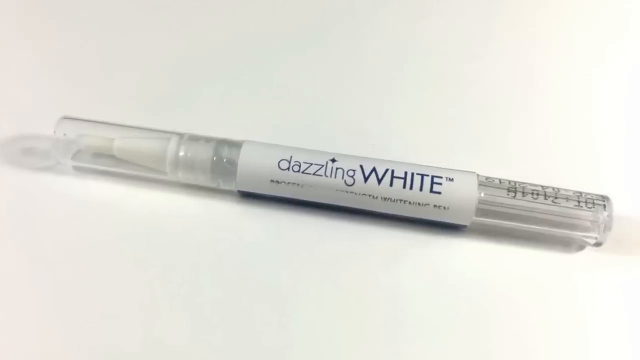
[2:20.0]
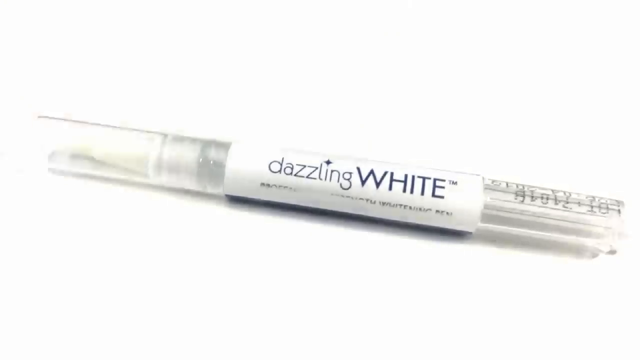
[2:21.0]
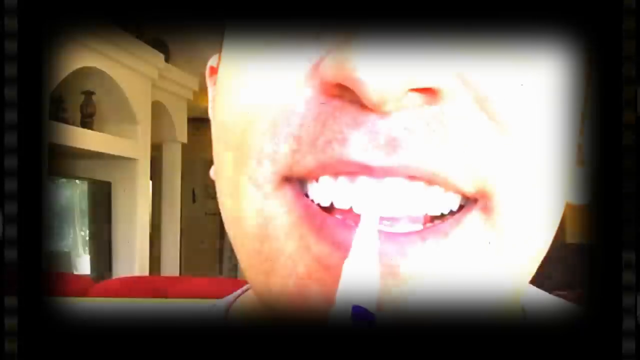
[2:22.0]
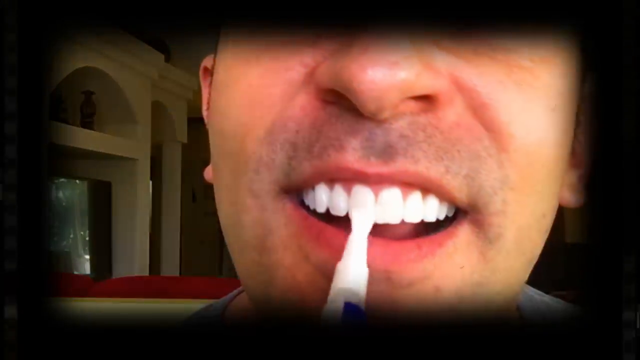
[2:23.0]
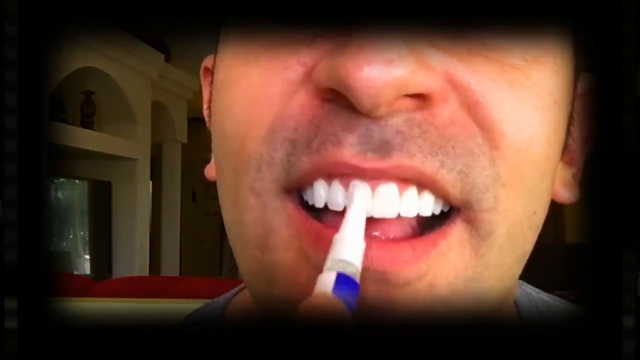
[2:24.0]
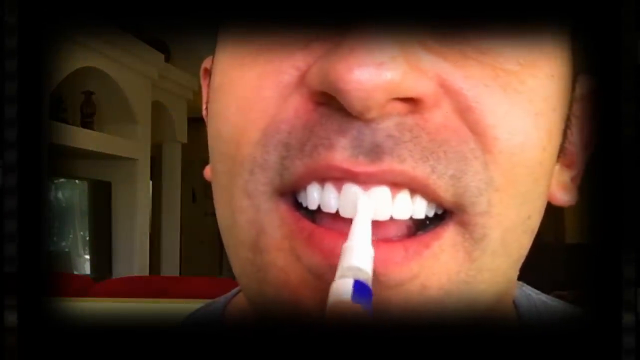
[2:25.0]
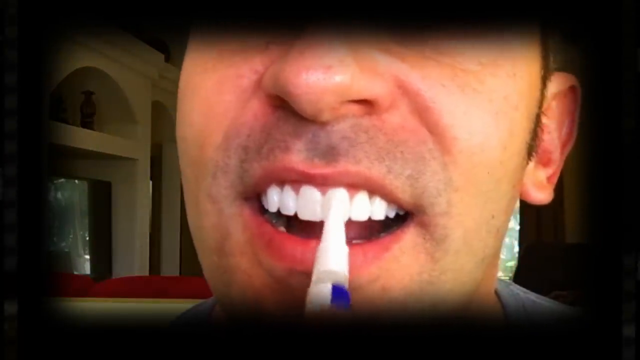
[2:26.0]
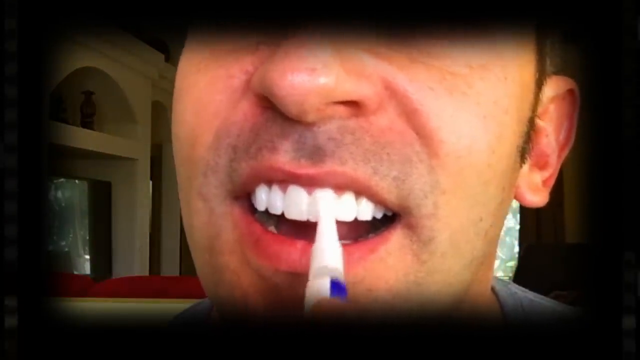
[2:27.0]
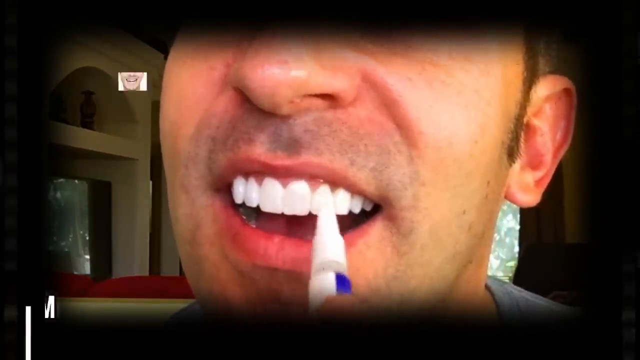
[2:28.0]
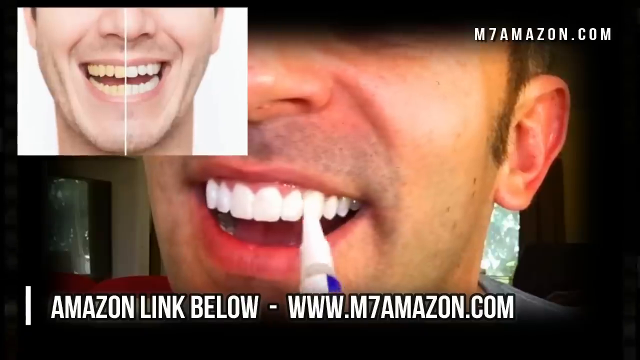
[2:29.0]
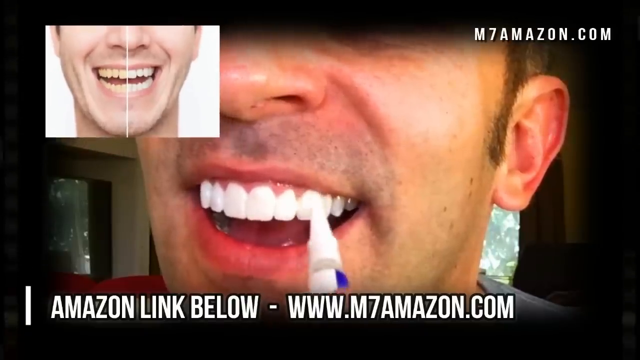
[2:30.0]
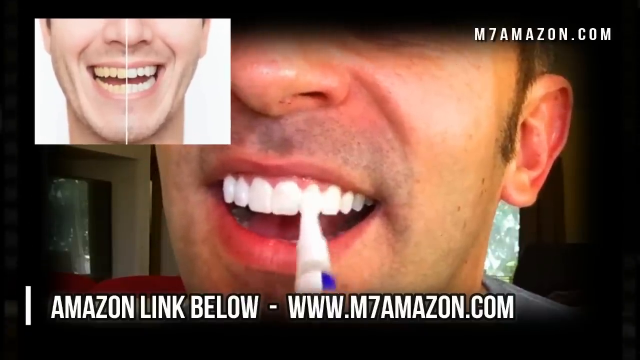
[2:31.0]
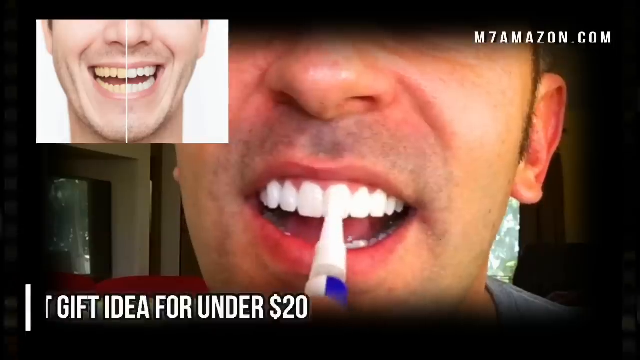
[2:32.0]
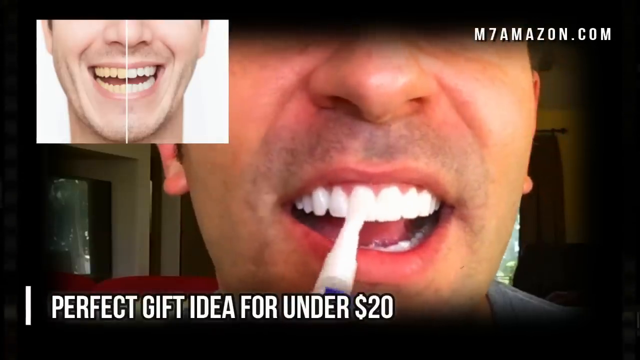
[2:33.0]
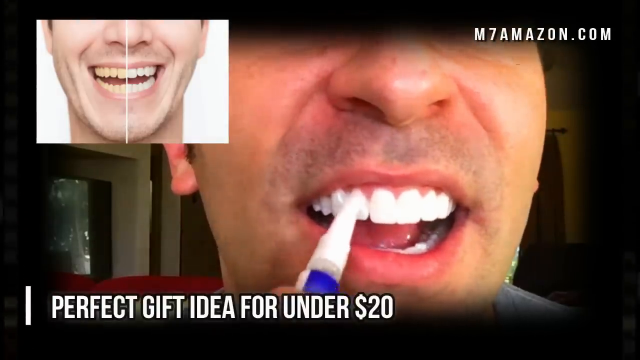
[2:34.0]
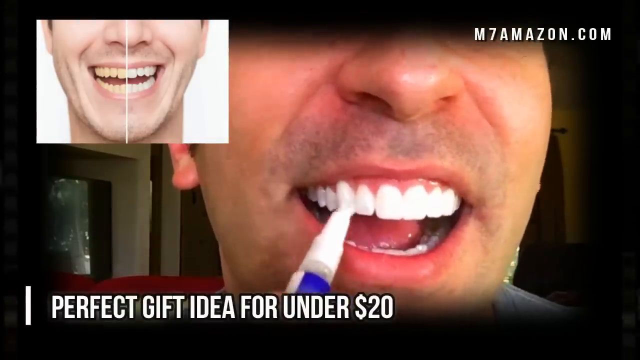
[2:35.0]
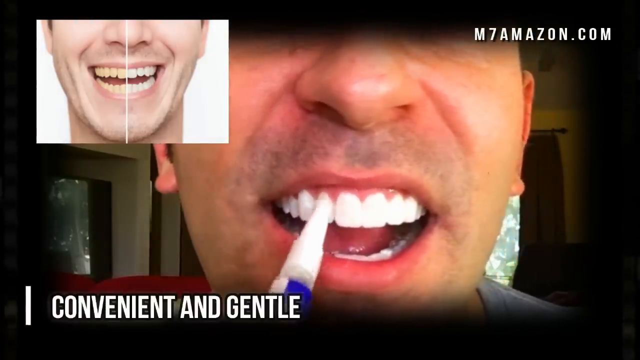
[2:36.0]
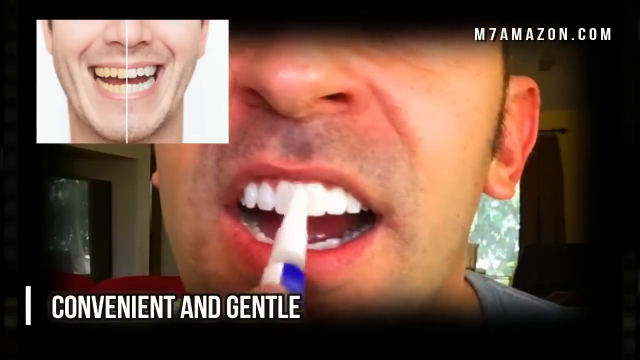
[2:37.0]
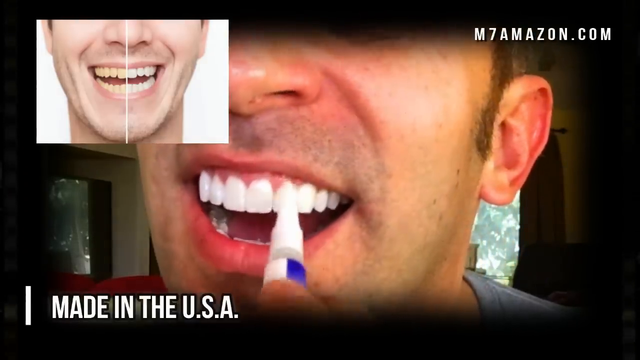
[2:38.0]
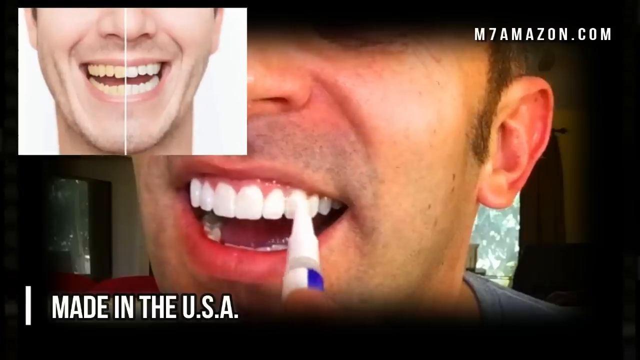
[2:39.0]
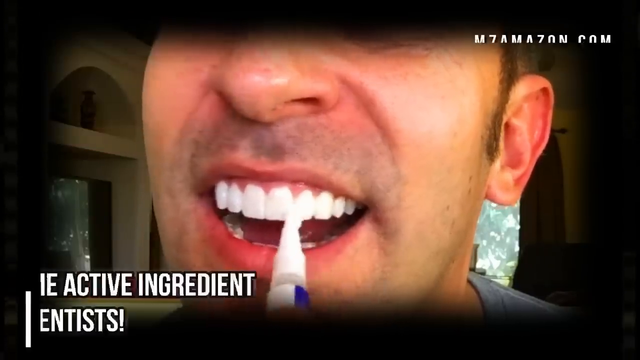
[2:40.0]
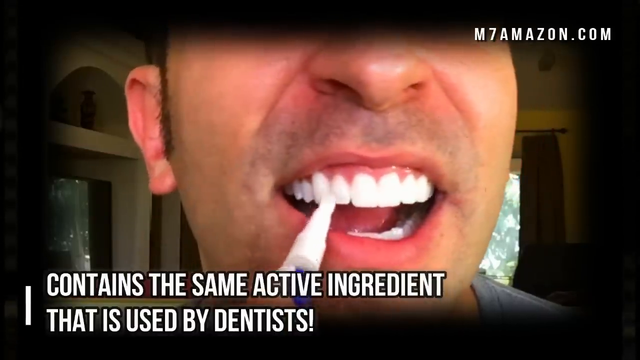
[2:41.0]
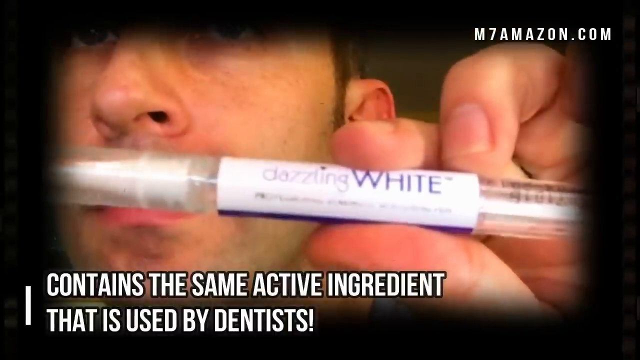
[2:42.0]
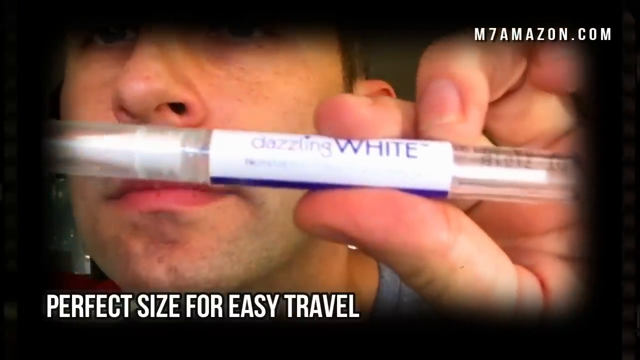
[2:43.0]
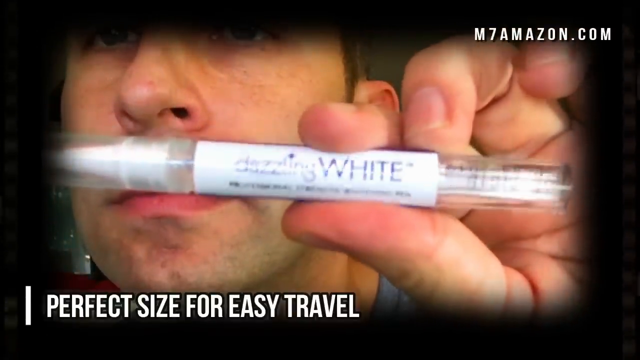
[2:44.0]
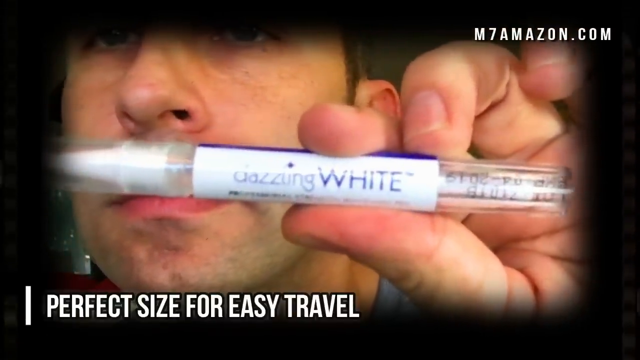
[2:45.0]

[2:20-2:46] A picture shows the whitening pen being sold. The pen is made of plastic and has a brush applicator, and a white logo on the package wrapped around it says "Dazzling White." Next, a person with very white teeth uses the product, applying the paste to the front of their teeth with the brush tip applicator. An Amazon link is listed below the video, along with an edited before-and-after picture showing yellow teeth before and white teeth after. White text underneath the video says "perfect gift idea for under $20. Convenient and gentle. Made in the USA." Text also says the product contains the same active ingredient used by dentists and emphasizes that it is easy to travel with.